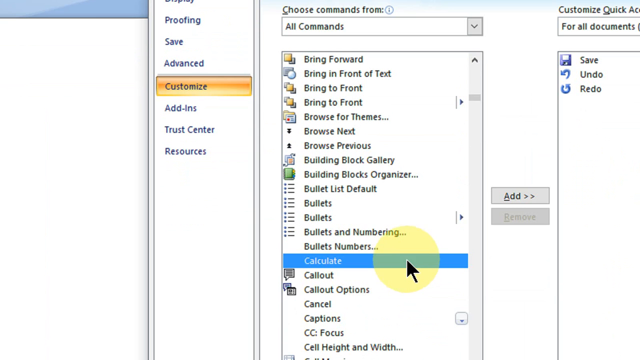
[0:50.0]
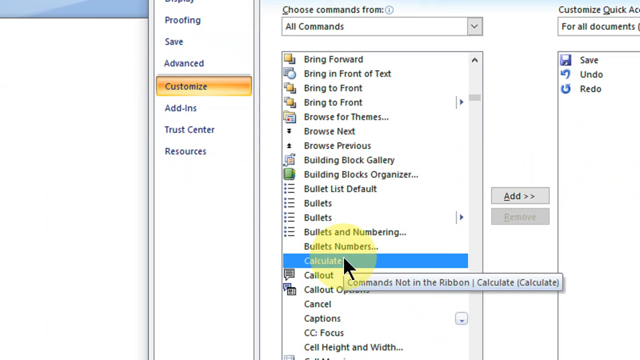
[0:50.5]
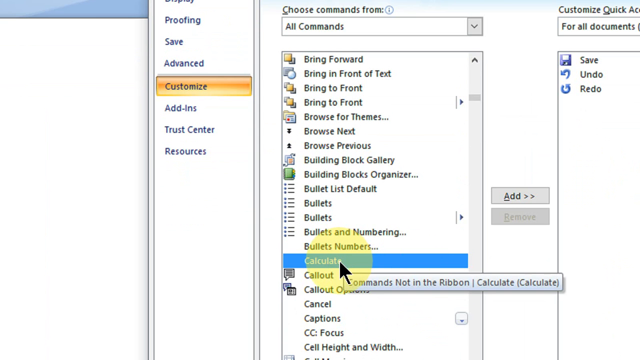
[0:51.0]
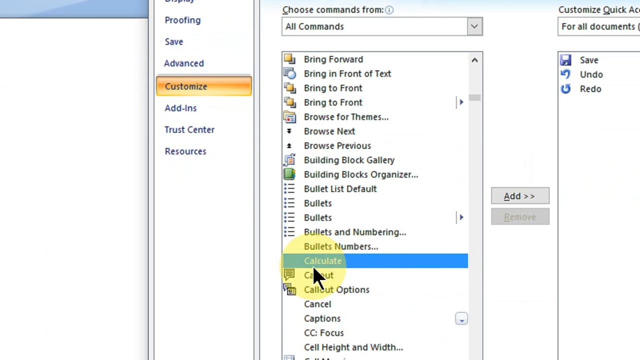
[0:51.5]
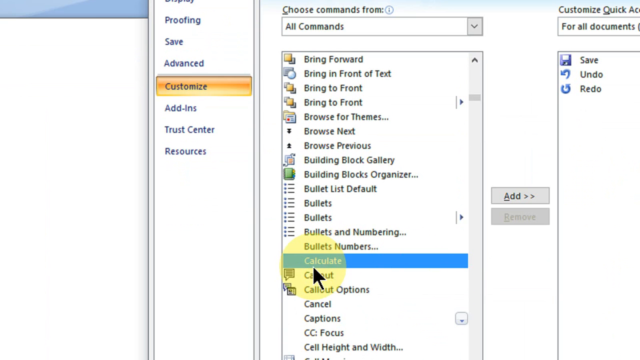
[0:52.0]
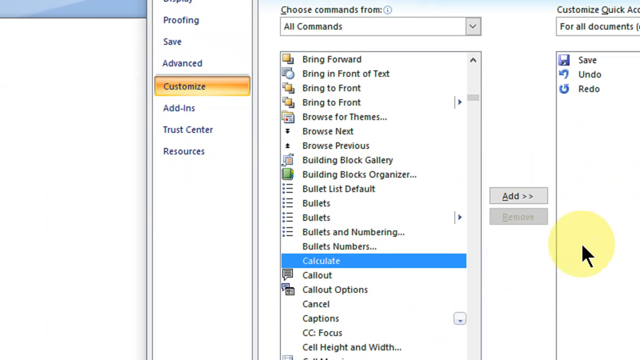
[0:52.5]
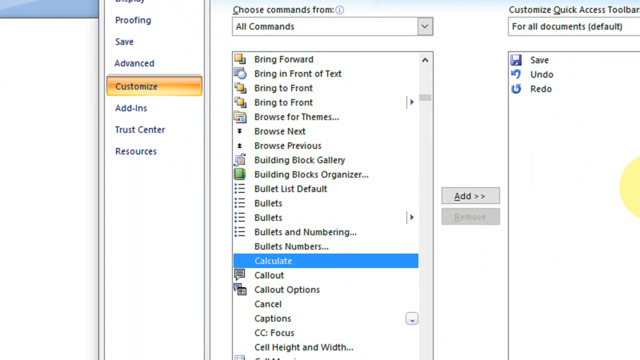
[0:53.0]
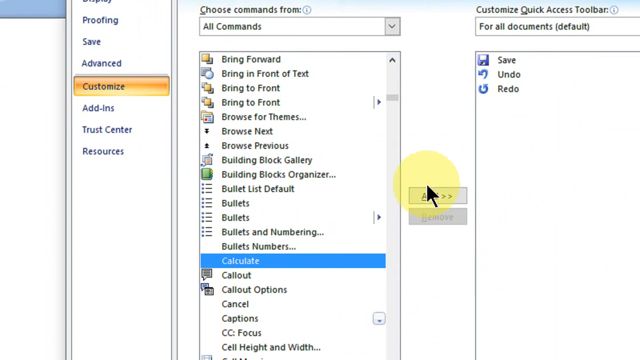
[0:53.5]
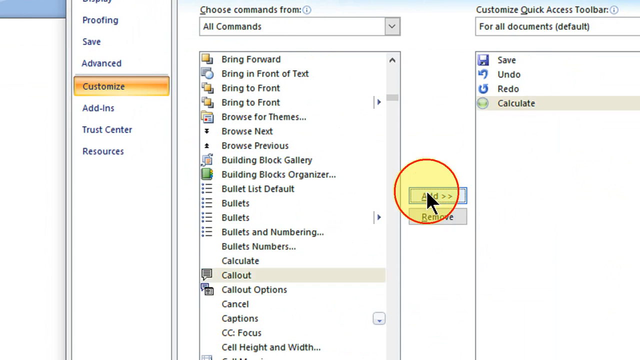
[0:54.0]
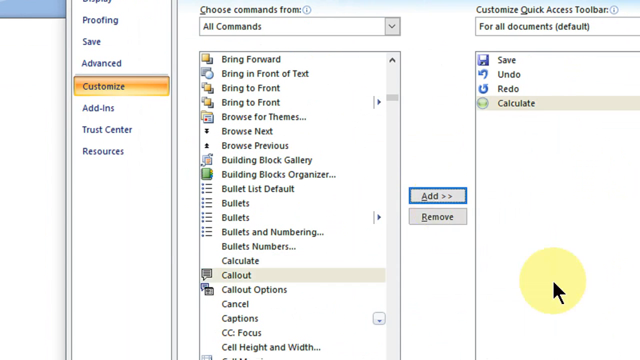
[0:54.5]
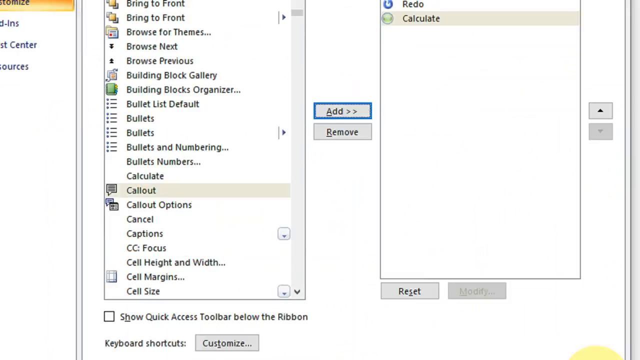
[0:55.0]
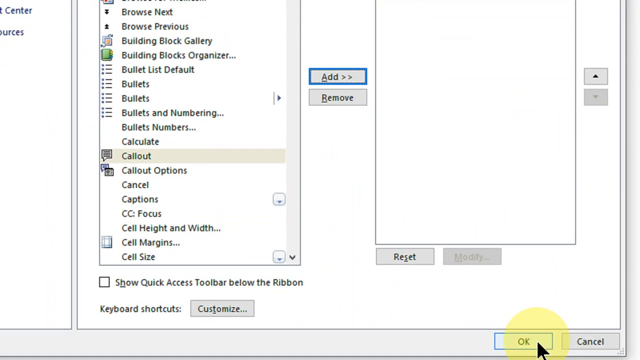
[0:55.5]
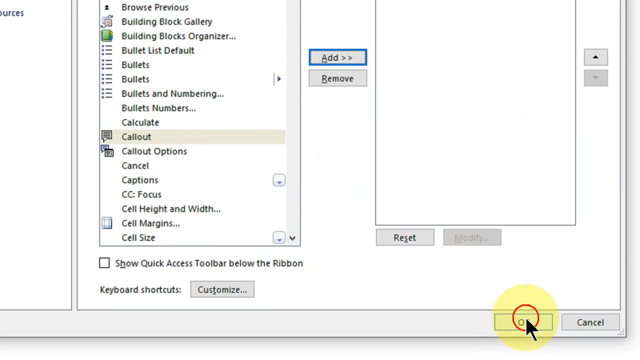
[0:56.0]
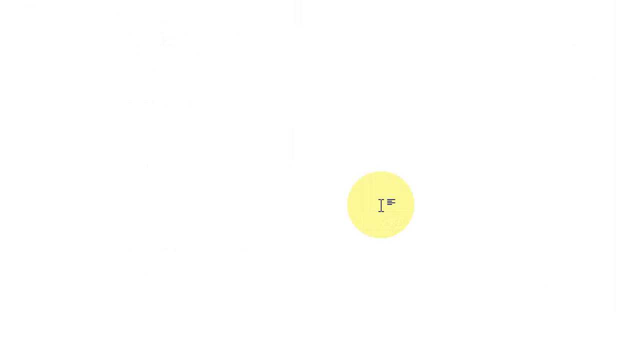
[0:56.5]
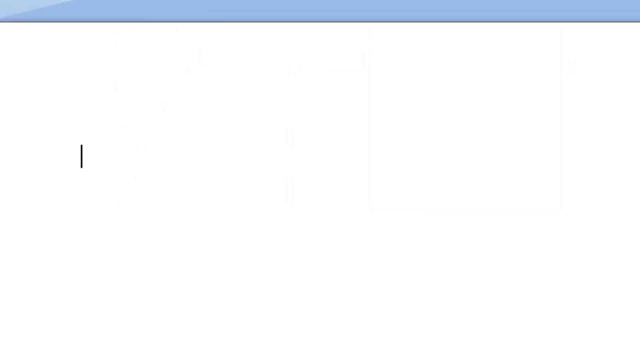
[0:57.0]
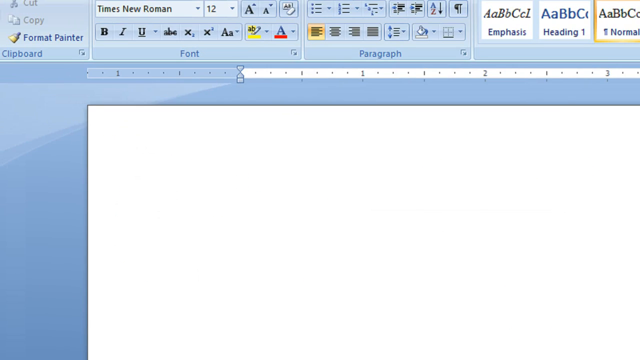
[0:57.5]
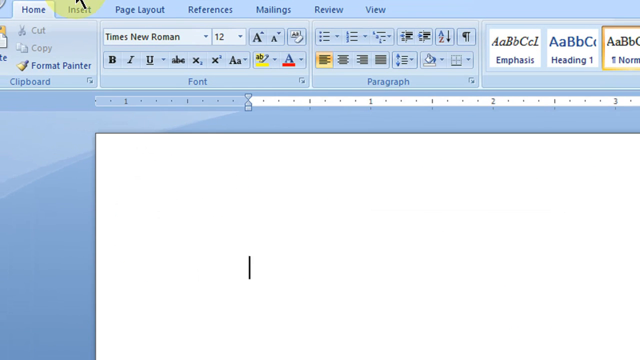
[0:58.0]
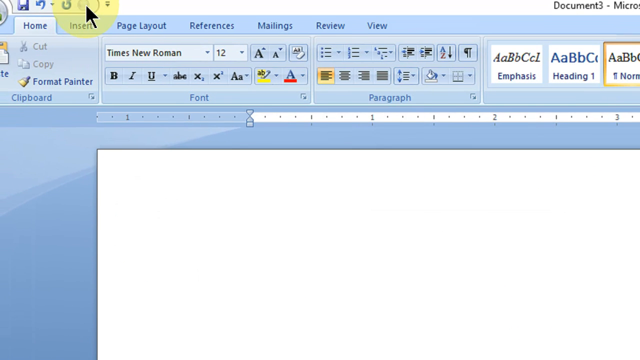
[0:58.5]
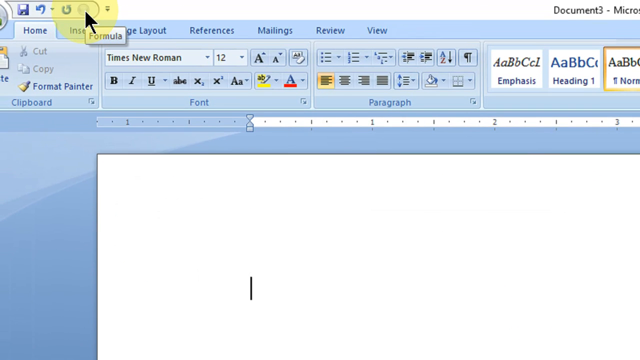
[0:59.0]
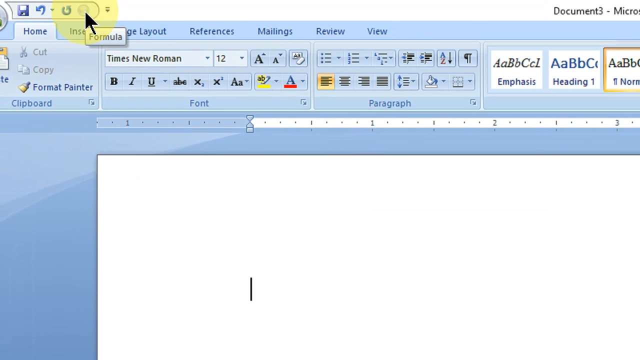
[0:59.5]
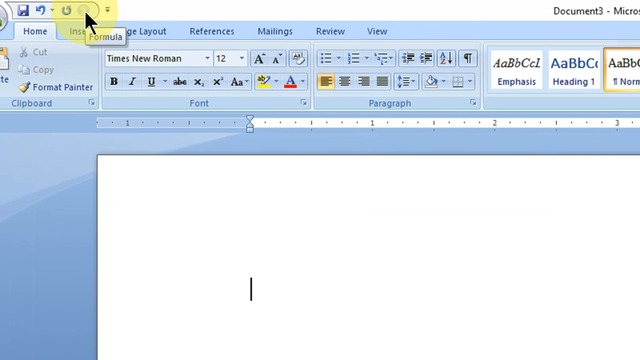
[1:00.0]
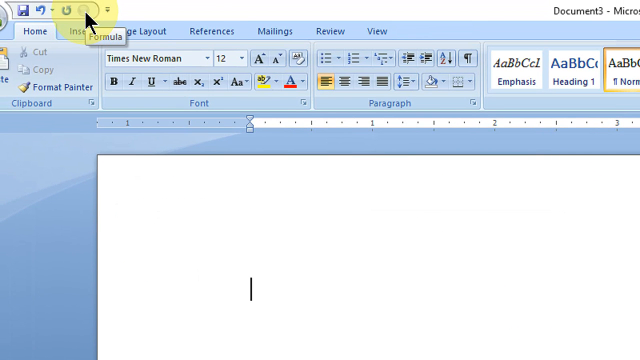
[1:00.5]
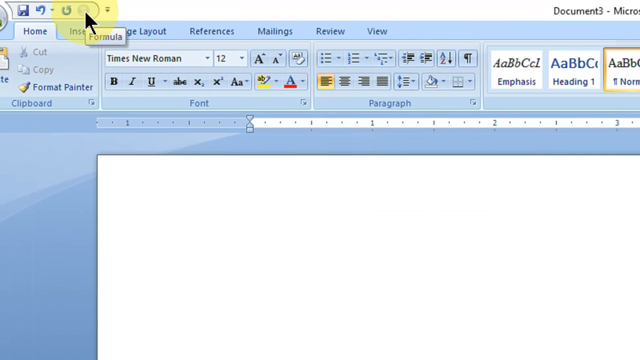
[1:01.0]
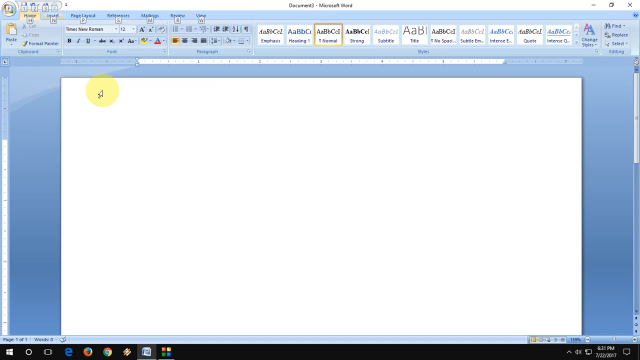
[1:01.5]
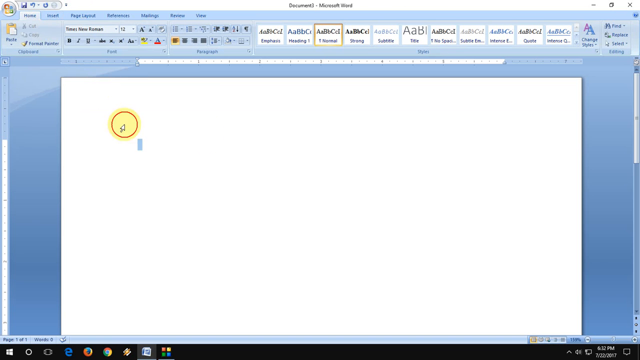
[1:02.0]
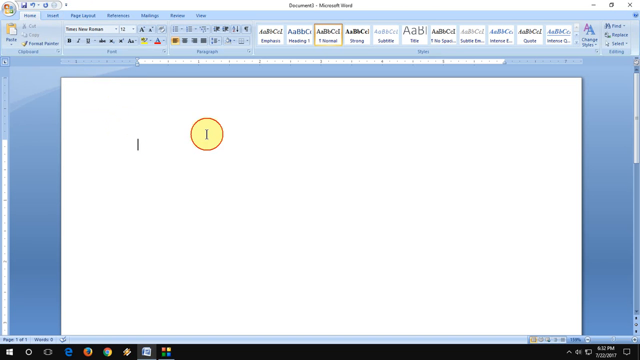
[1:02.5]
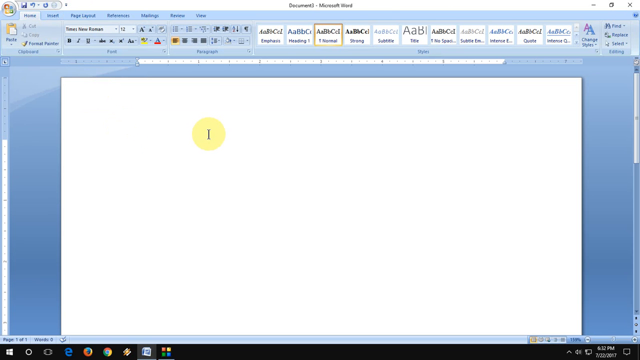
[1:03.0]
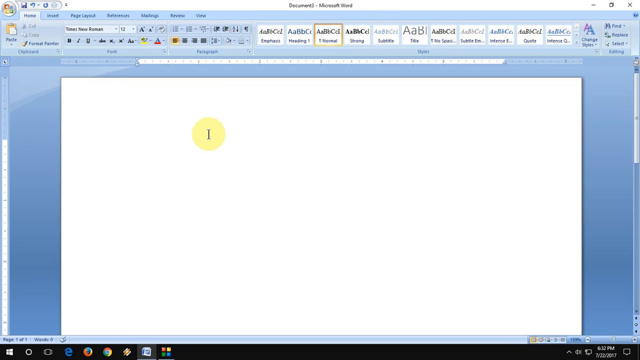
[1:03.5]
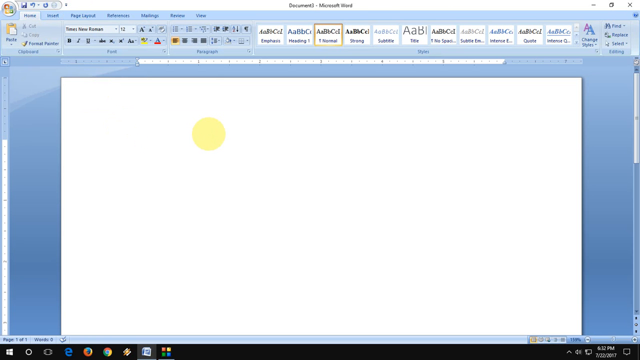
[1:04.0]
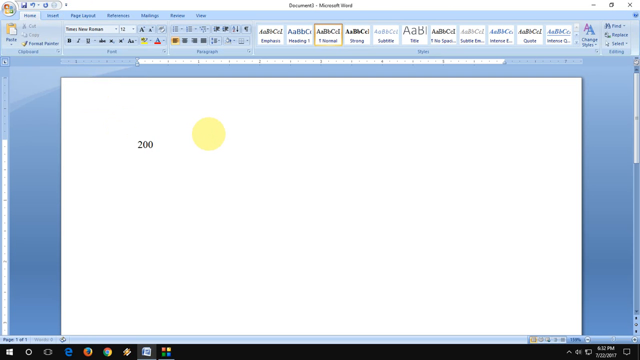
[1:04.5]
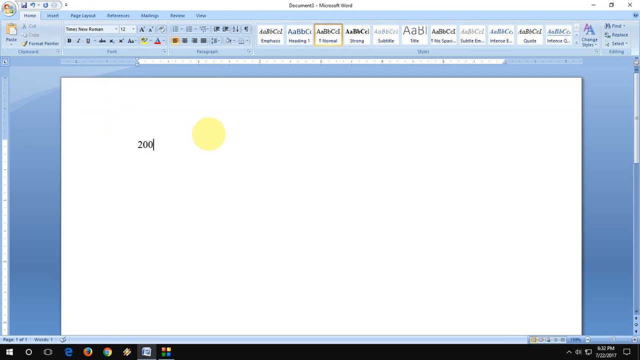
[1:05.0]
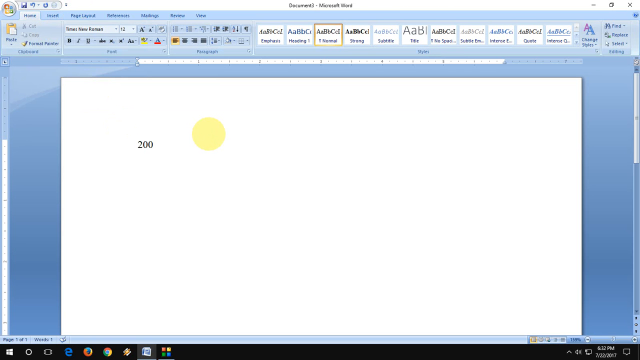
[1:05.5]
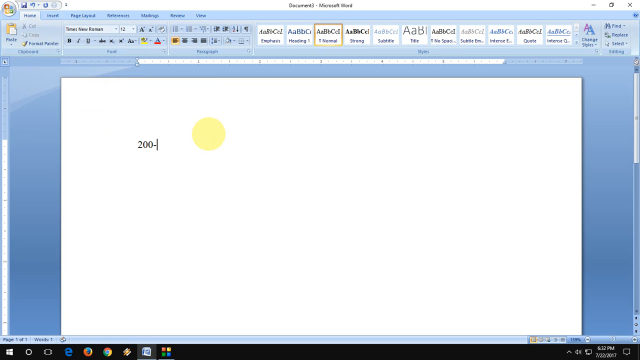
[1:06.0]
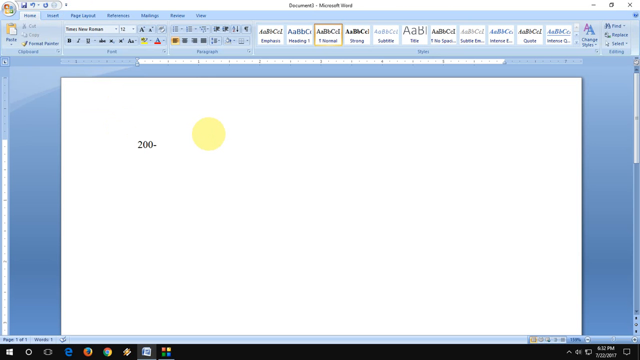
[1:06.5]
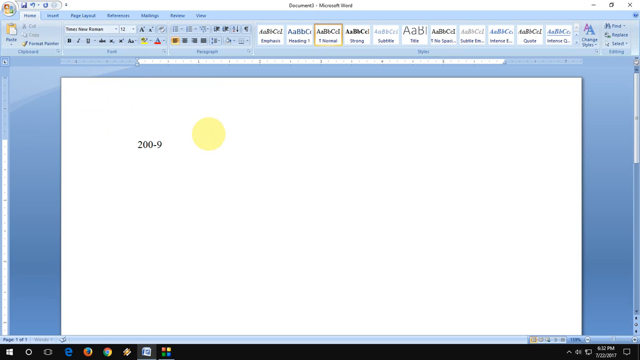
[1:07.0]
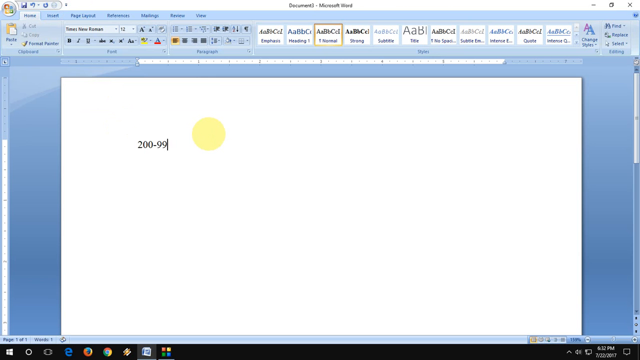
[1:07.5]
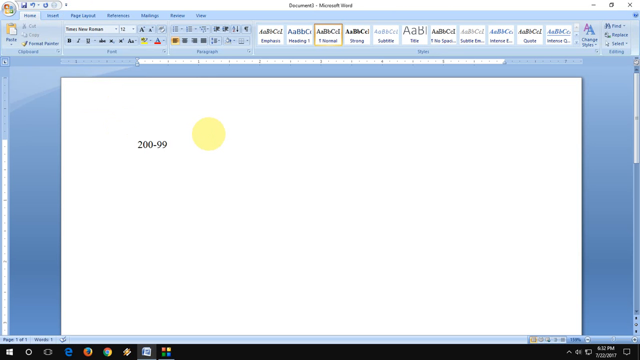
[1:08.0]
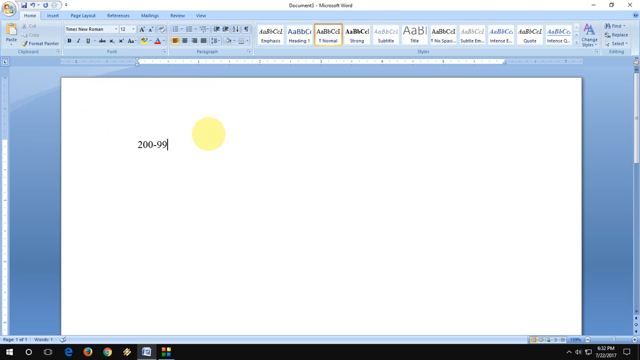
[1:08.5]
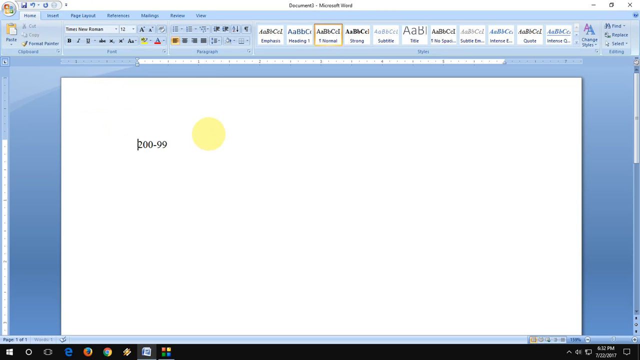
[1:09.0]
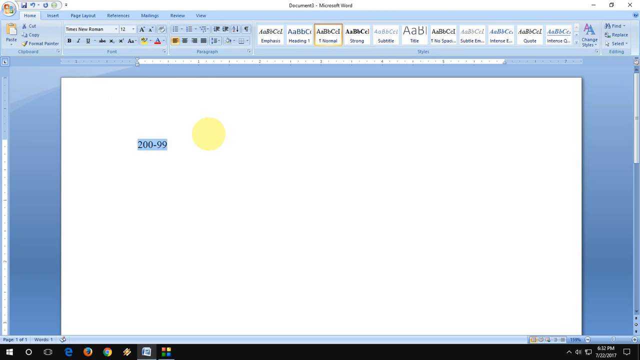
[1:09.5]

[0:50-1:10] The user clicks the Calculate option in the left table under Choose Commands From, then clicks the Add button in the center of the screen, moving it to the right table, called Customize Quick Access Toolbar. The user clicks the OK button at the bottom right of the dialog box, which closes the window. The mouse cursor goes to the page and clicks on it, and the user types "200-99" at the top left of the page, then highlights this text. The text is in Times New Roman, font size 12. The paragraph indentation is set to the standard option, the far-left of the four indentation types, which is selected.